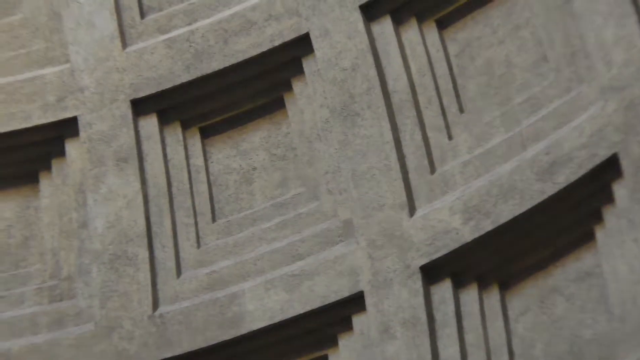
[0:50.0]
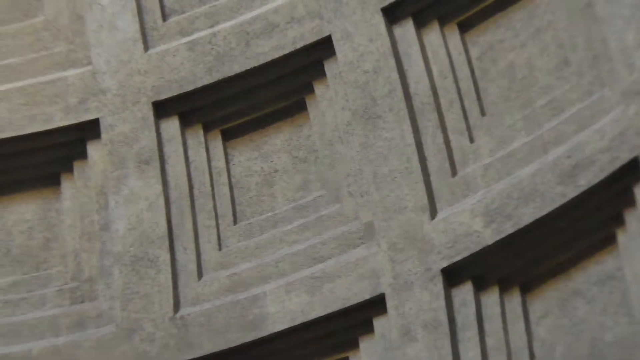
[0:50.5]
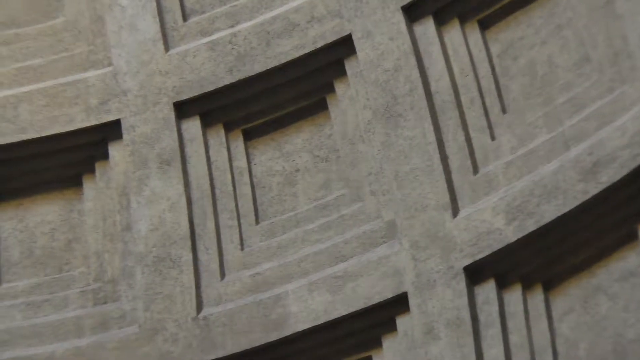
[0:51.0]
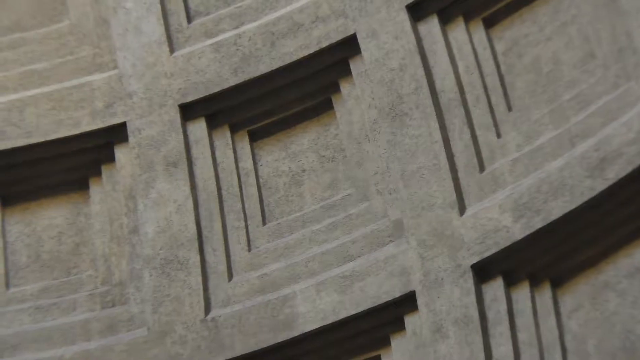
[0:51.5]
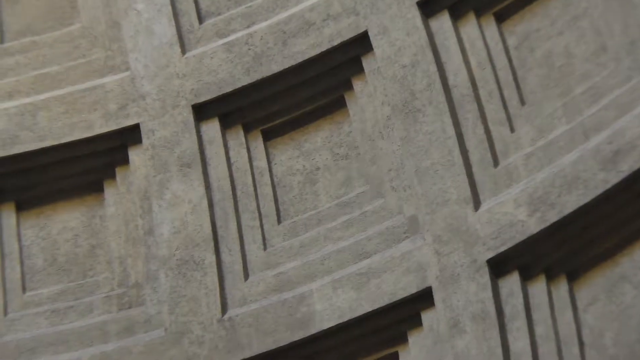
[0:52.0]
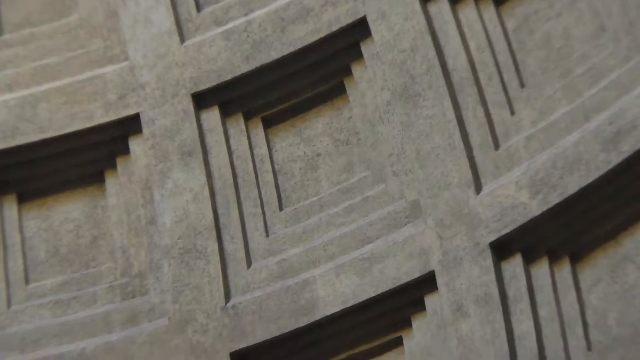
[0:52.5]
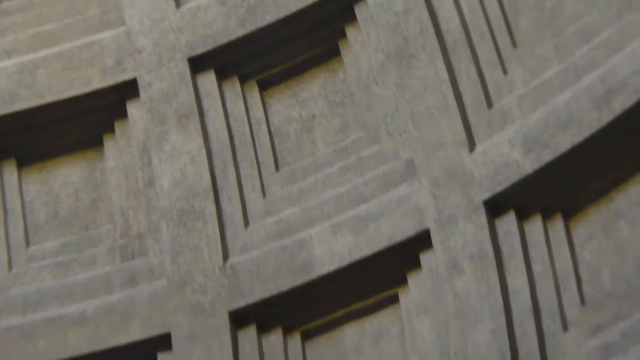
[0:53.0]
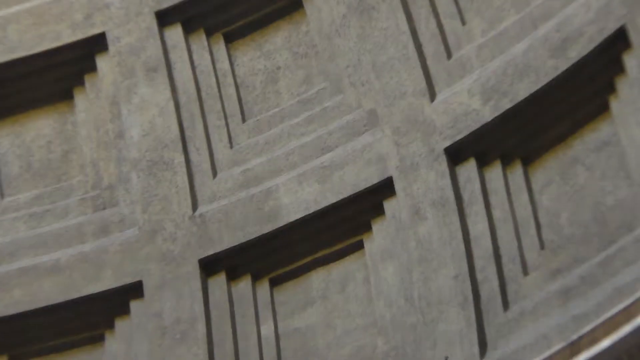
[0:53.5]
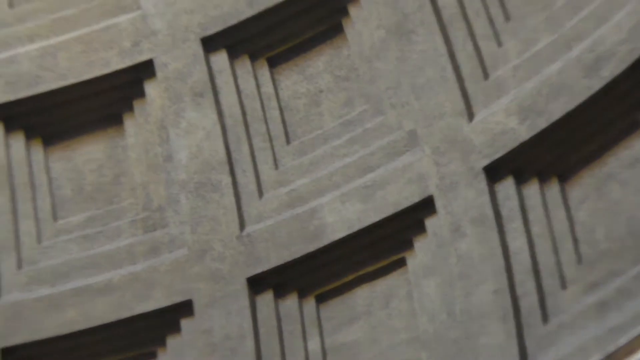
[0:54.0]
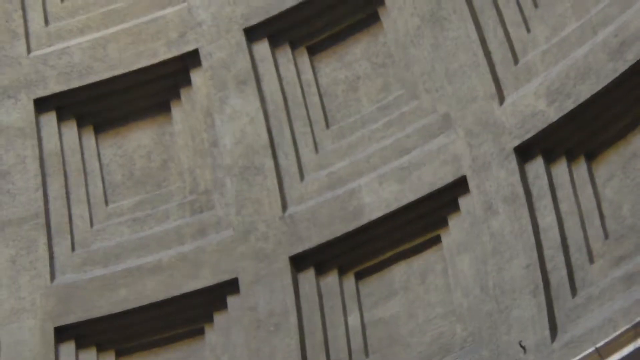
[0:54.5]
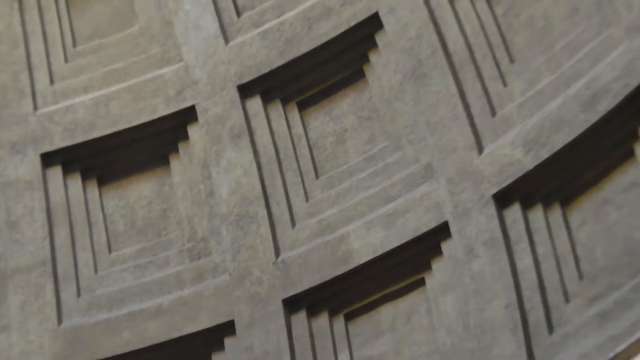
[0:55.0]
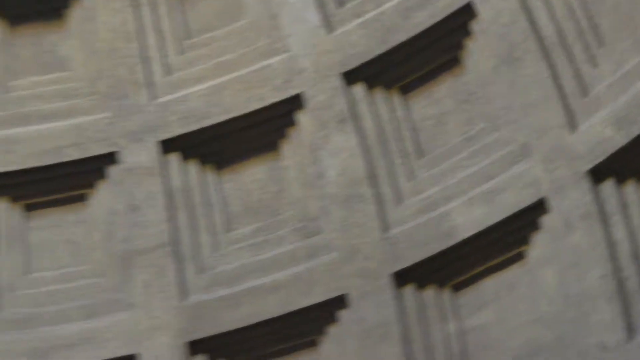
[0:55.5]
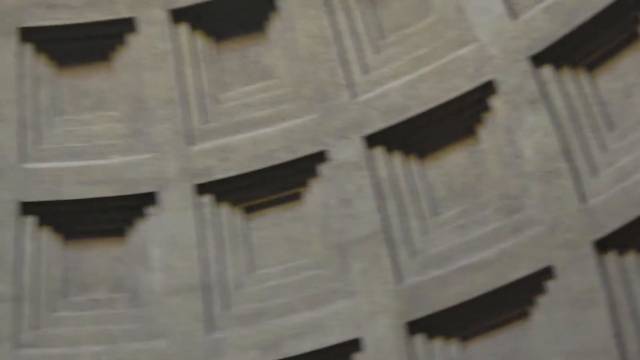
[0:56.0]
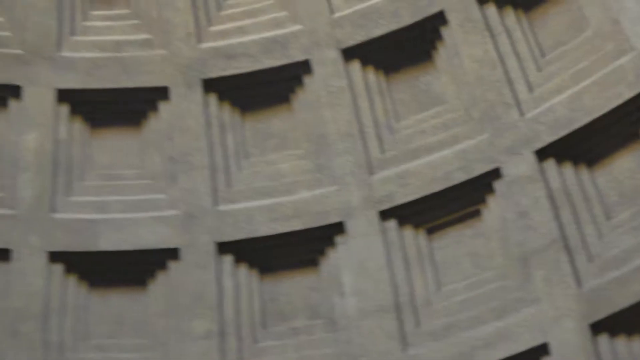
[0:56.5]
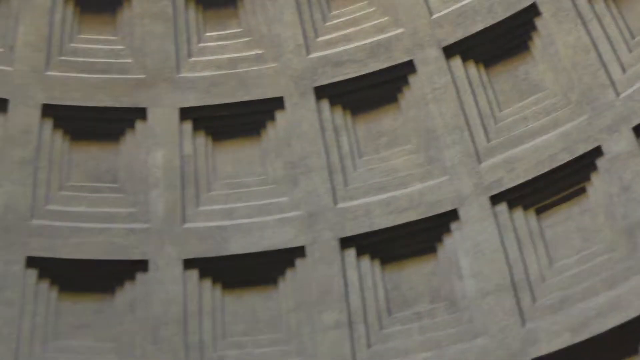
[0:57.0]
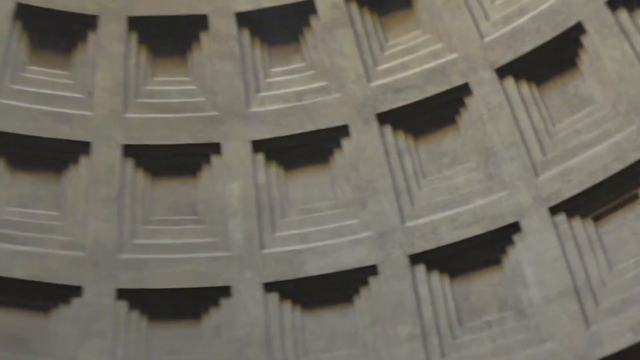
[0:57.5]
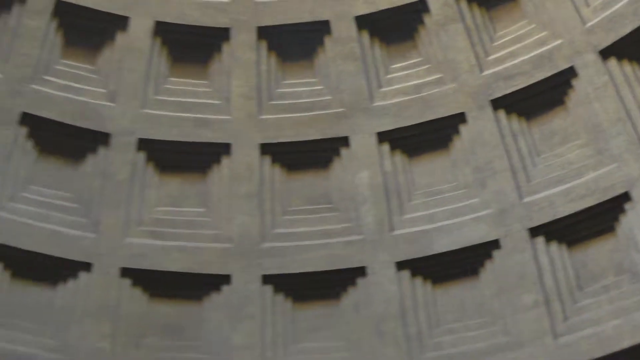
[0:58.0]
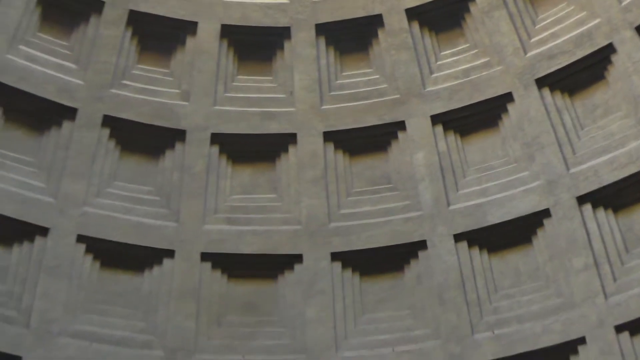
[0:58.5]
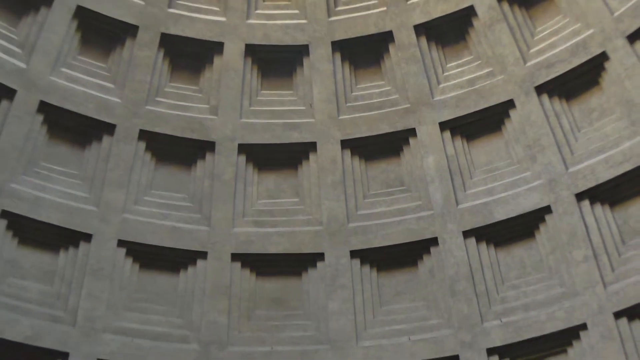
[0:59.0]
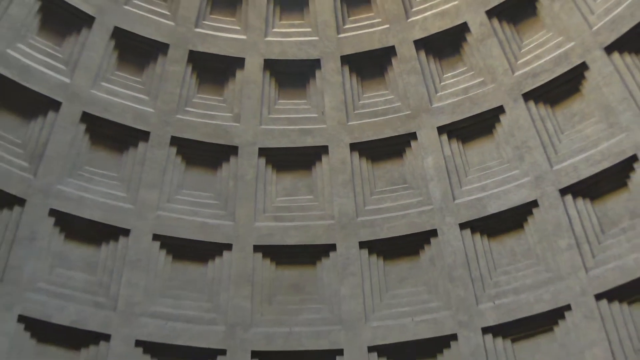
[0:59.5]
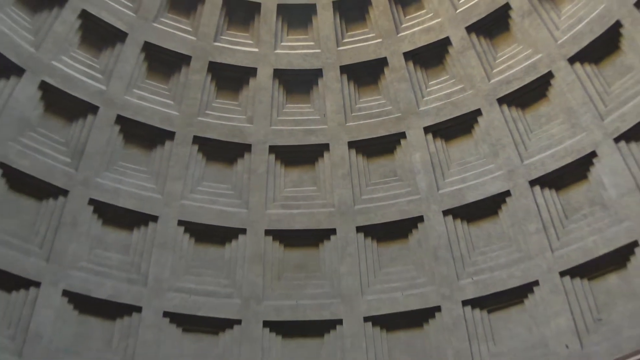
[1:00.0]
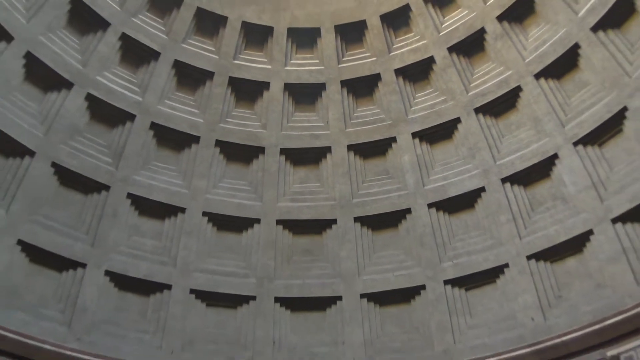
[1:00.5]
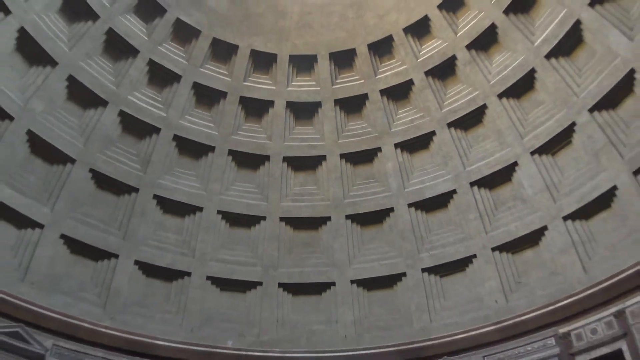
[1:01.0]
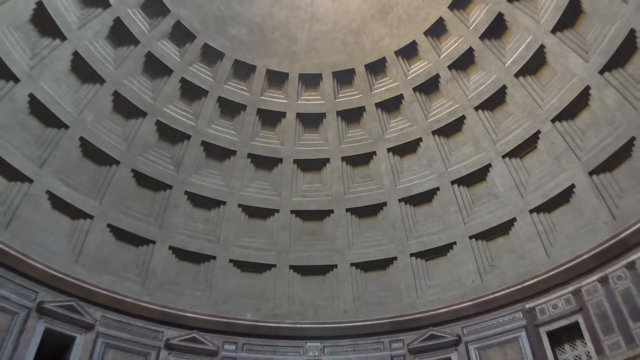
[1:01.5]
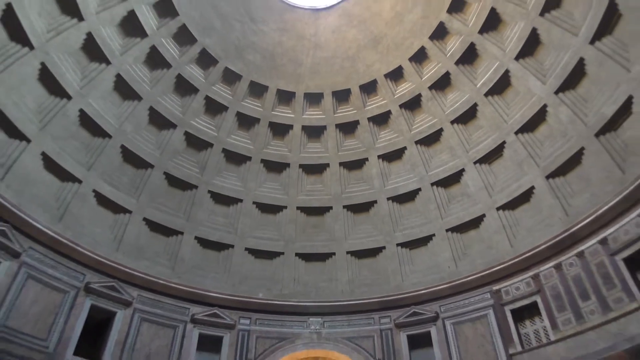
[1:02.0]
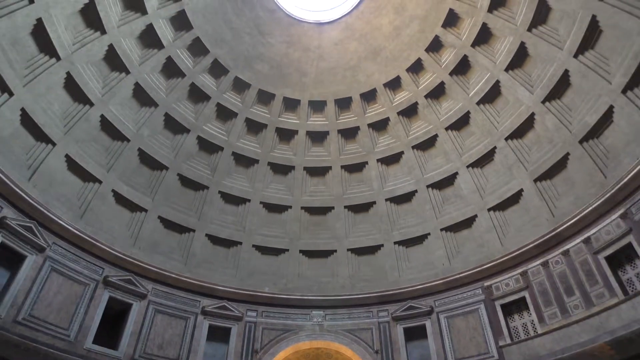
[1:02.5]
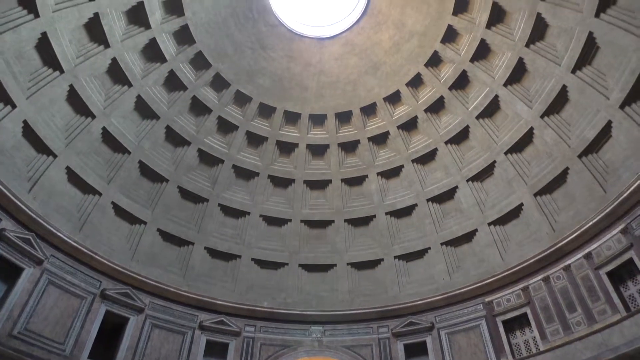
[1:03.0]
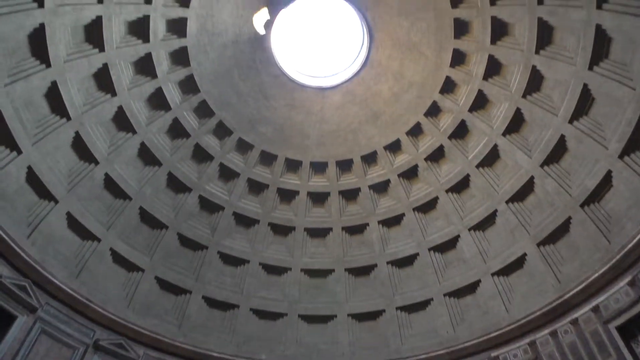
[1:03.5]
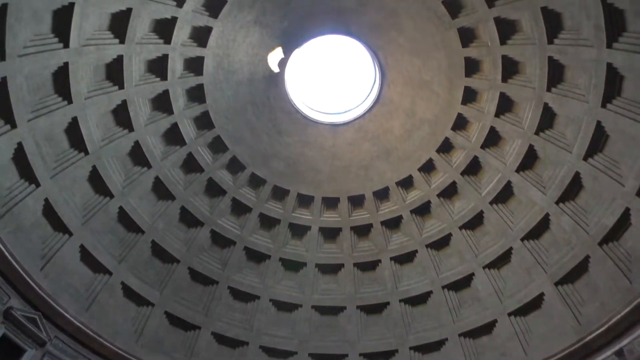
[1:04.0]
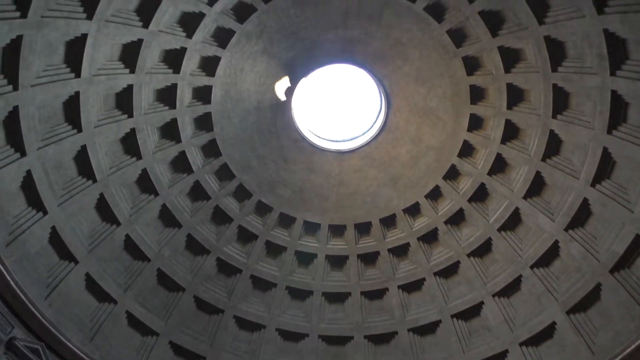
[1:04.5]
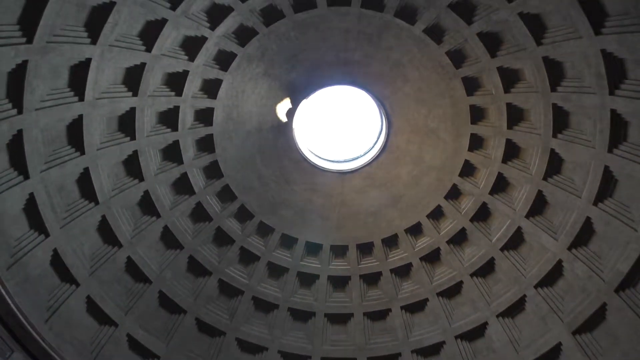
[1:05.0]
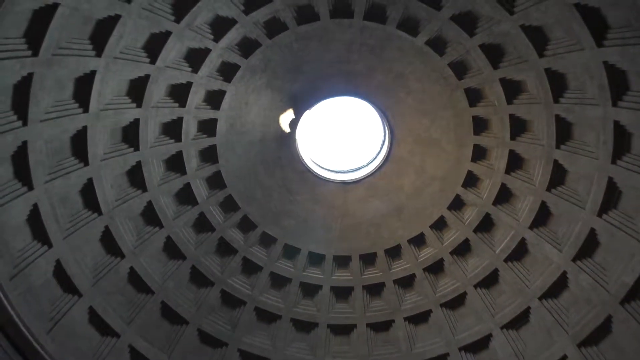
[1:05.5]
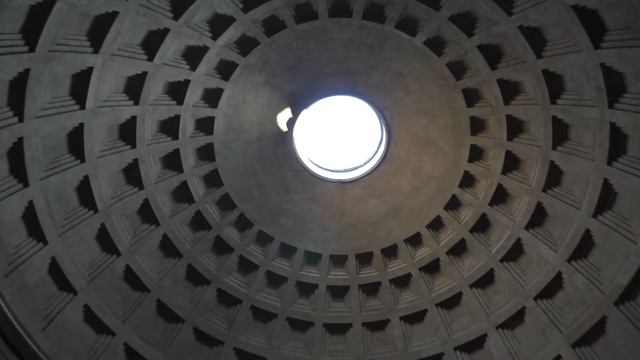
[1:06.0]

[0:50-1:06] The zoomed-in view of the squares holds for a few moments as the camera wobbles back and forth. The image becomes slightly out of focus and the squares seem to blur. The camera then pans rapidly to the left, showing shadows in the top layer of the squares from the skylight above. It keeps panning left, slows down, and begins zooming out while pointed at the third layer of squares. There appear to be five layers of squares from top to bottom, extending all the way around the dome. The camera zooms back out to the original zoom level and pans upward, showing the bright, circular skylight again and the light to the left of it. The video ends pointed toward the skylight.